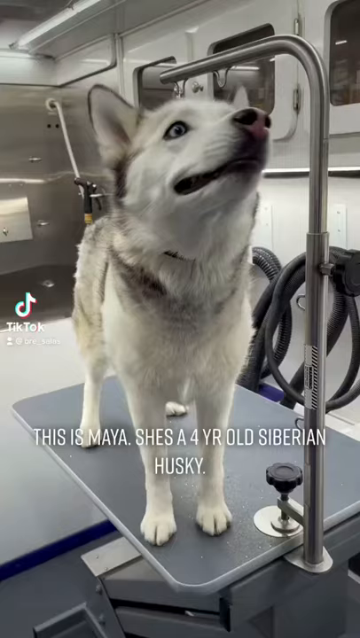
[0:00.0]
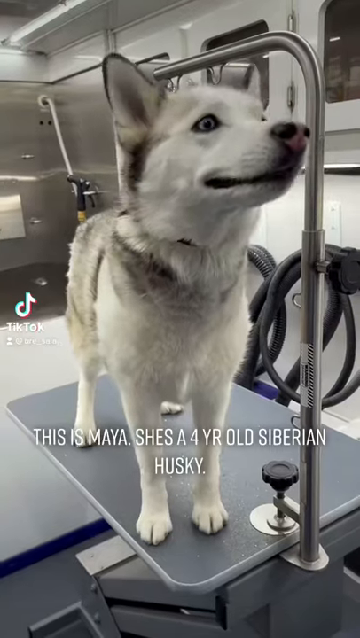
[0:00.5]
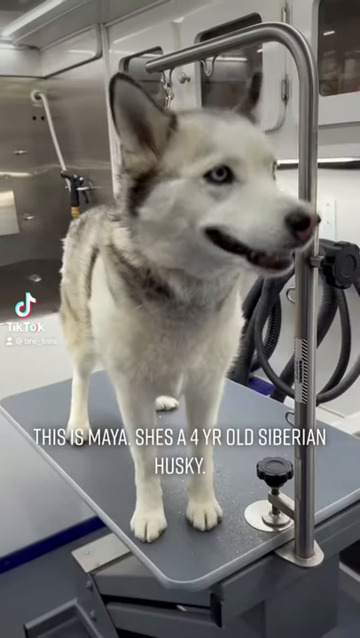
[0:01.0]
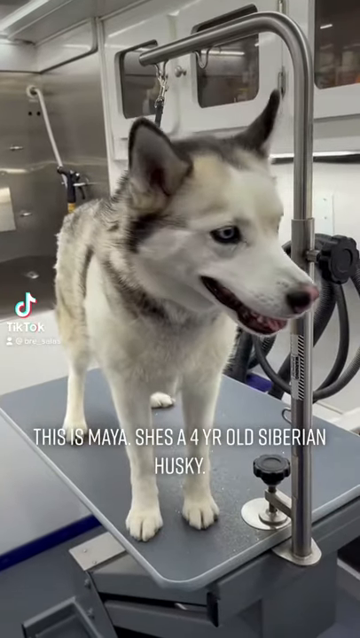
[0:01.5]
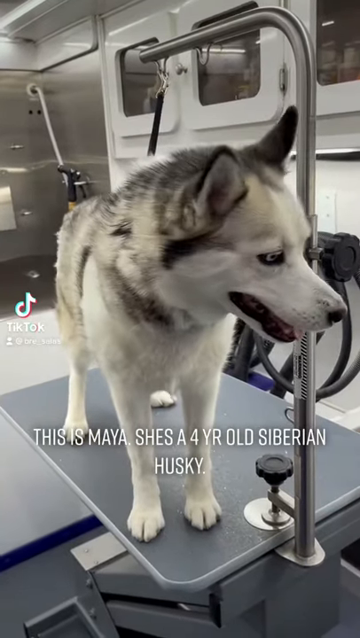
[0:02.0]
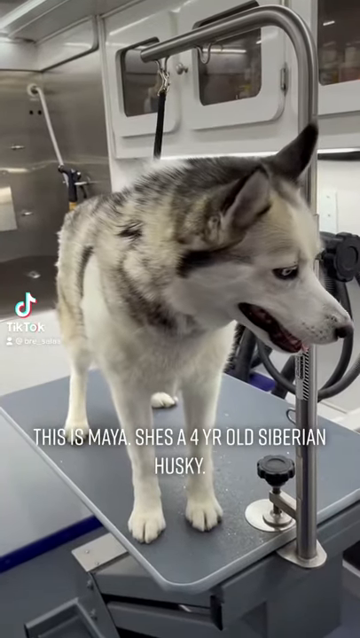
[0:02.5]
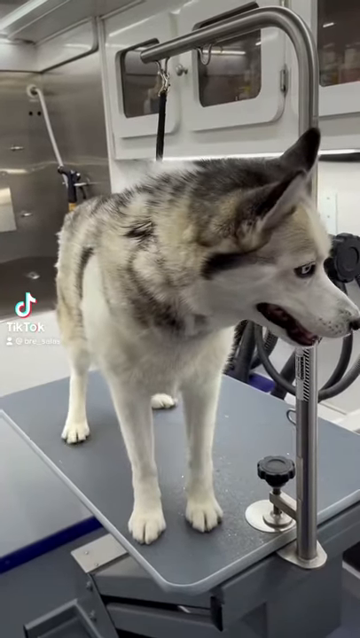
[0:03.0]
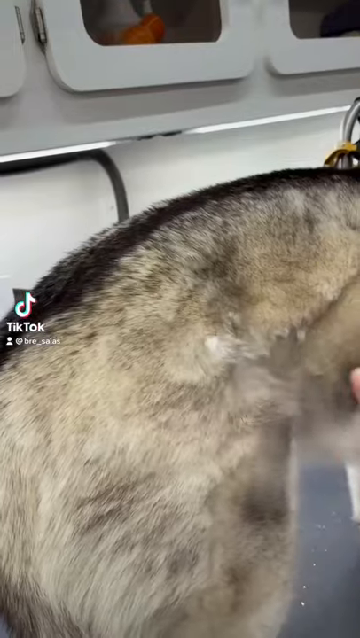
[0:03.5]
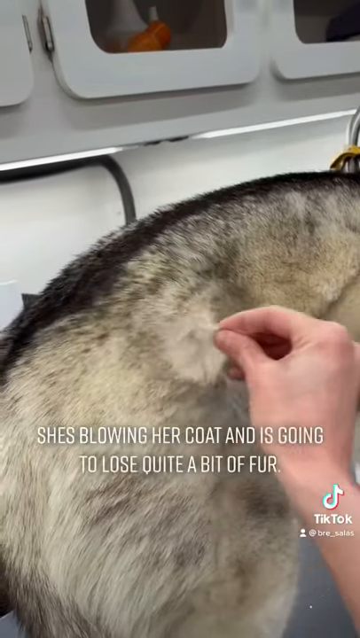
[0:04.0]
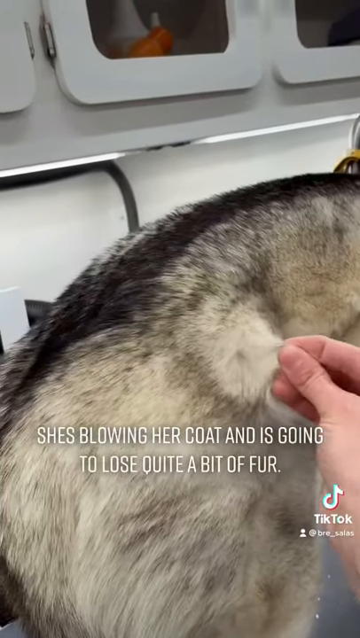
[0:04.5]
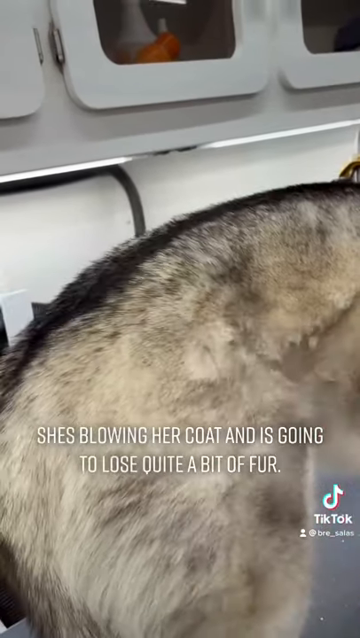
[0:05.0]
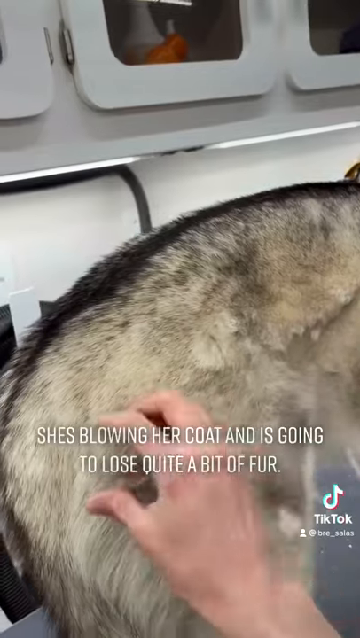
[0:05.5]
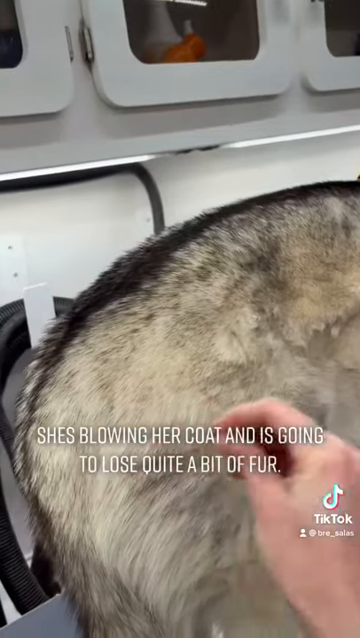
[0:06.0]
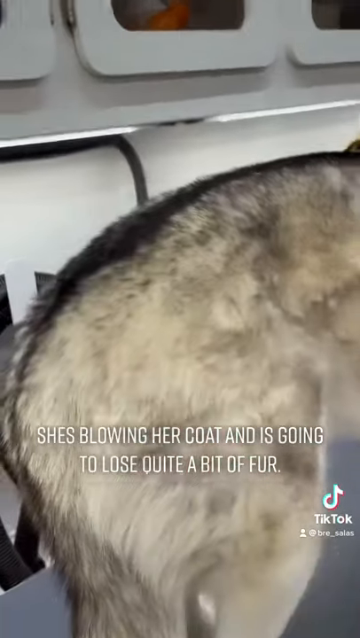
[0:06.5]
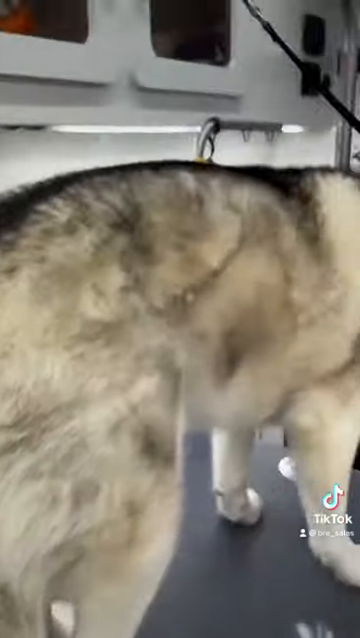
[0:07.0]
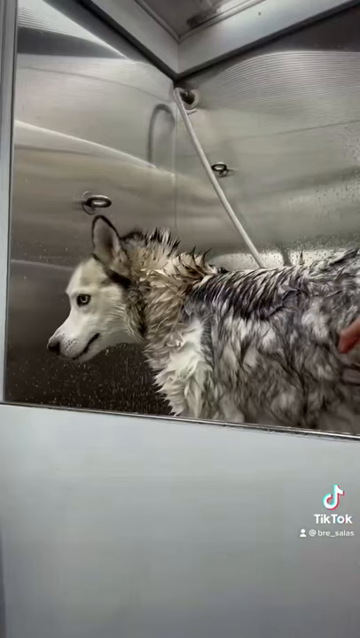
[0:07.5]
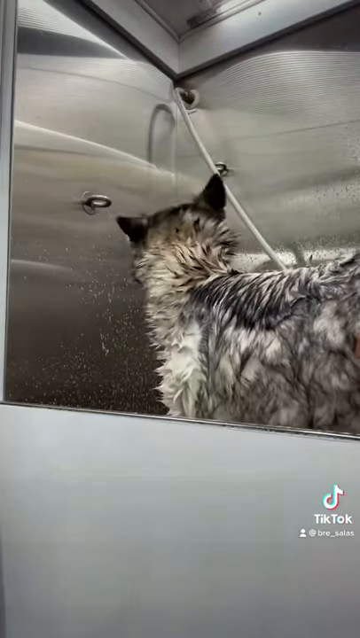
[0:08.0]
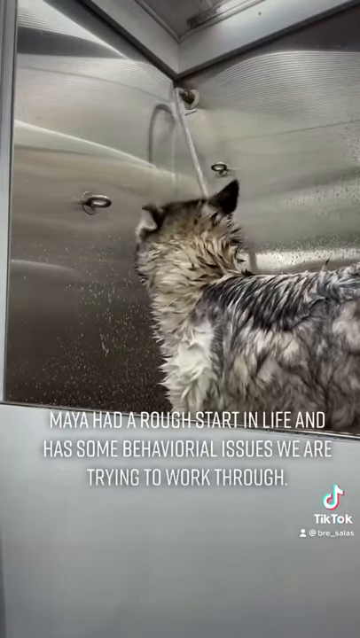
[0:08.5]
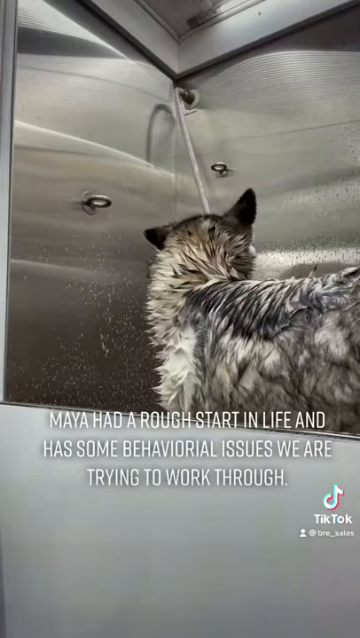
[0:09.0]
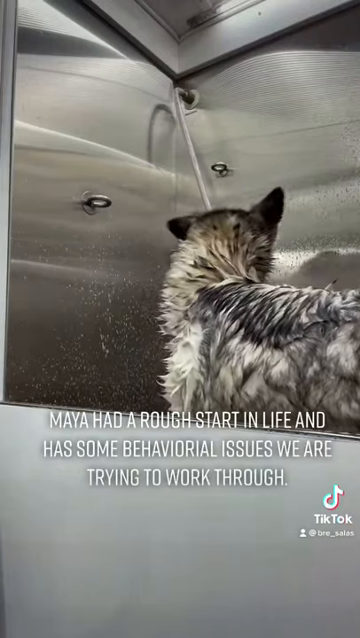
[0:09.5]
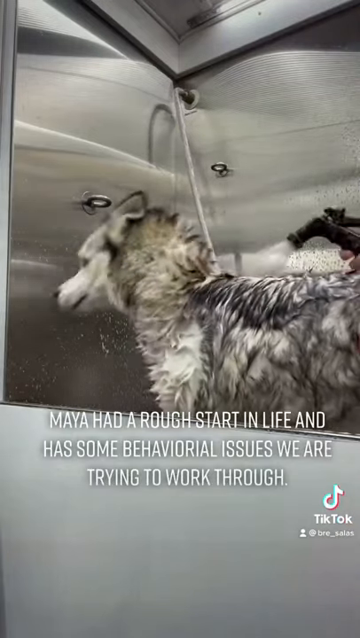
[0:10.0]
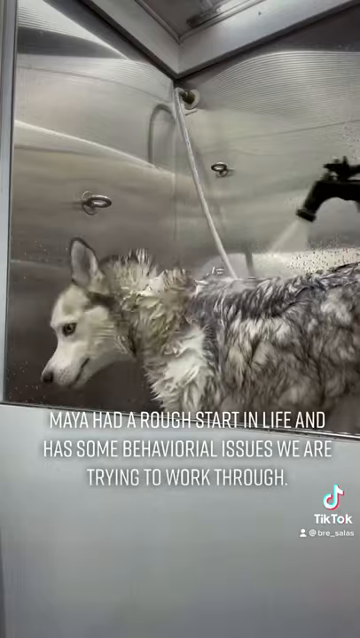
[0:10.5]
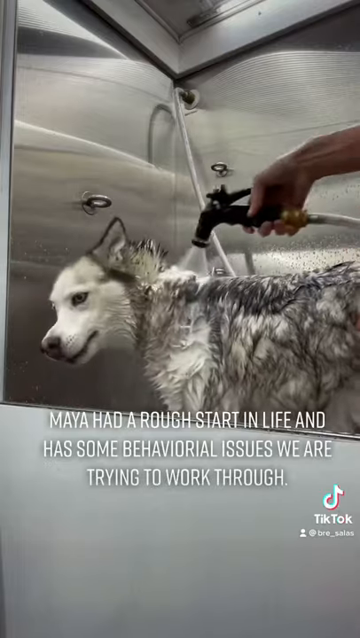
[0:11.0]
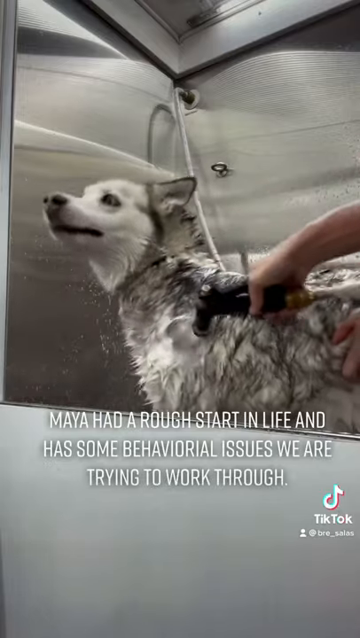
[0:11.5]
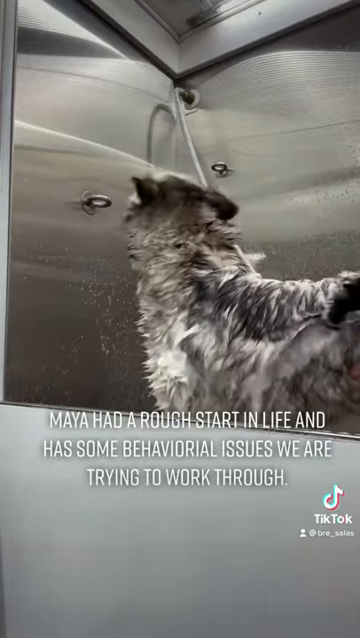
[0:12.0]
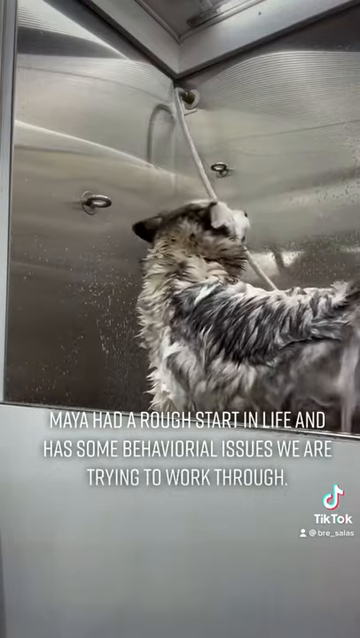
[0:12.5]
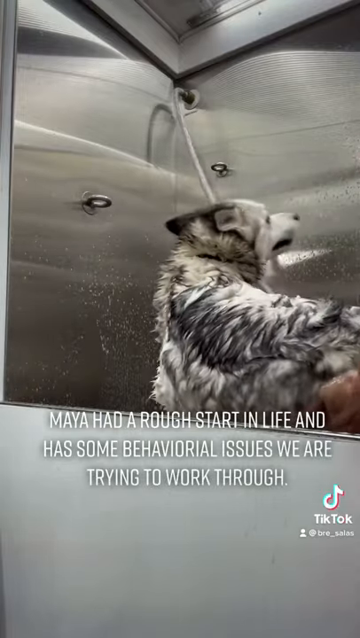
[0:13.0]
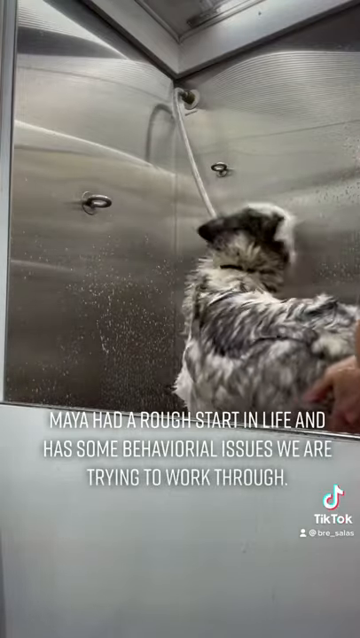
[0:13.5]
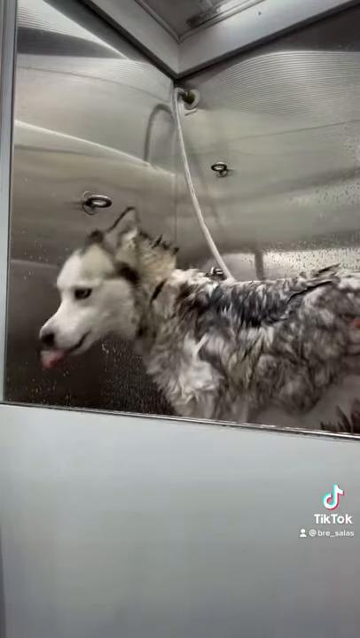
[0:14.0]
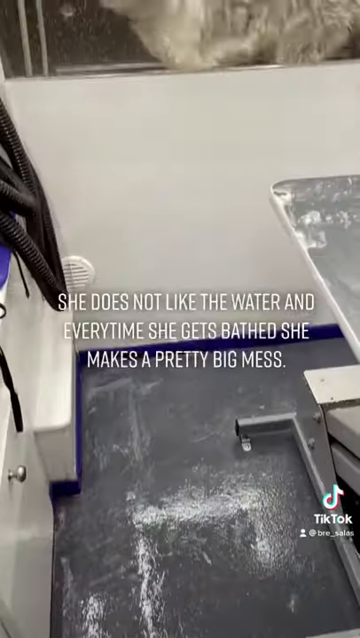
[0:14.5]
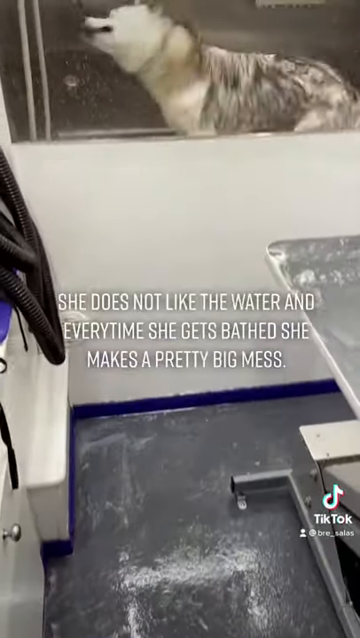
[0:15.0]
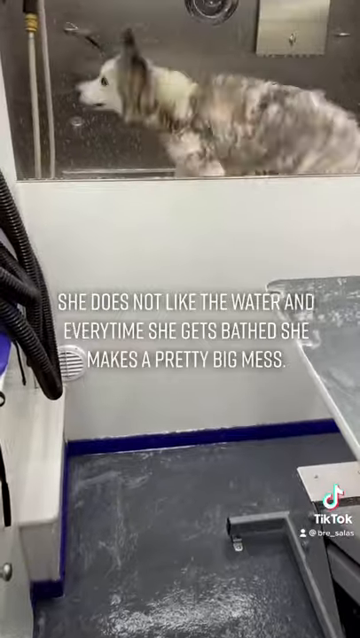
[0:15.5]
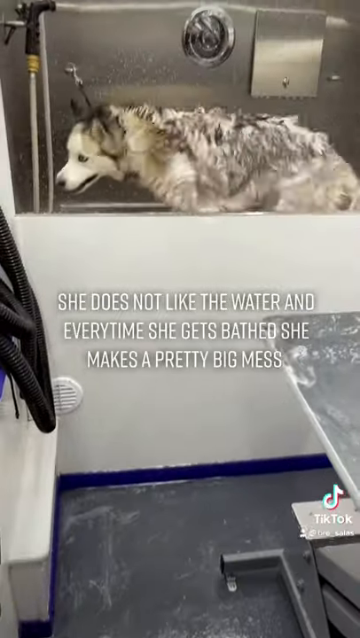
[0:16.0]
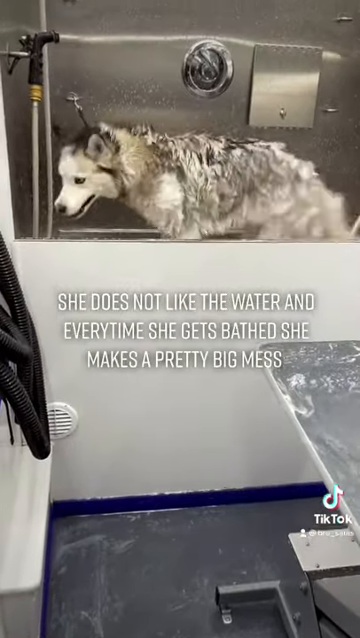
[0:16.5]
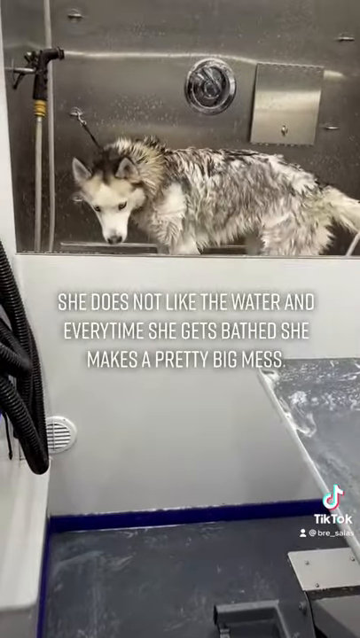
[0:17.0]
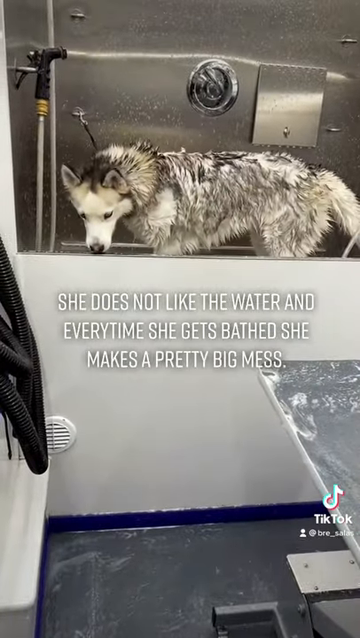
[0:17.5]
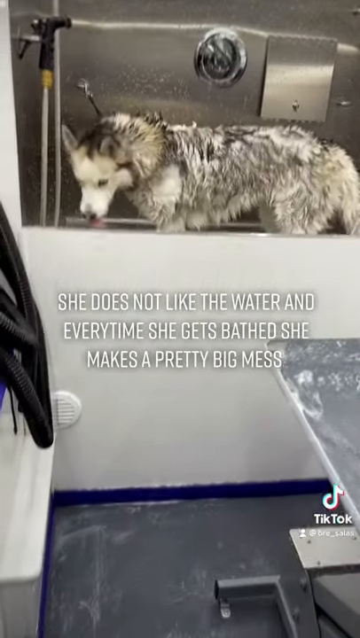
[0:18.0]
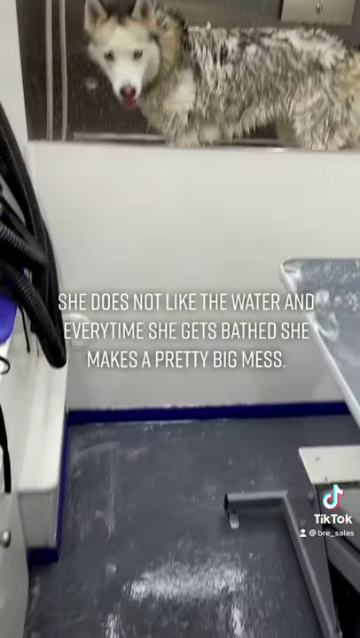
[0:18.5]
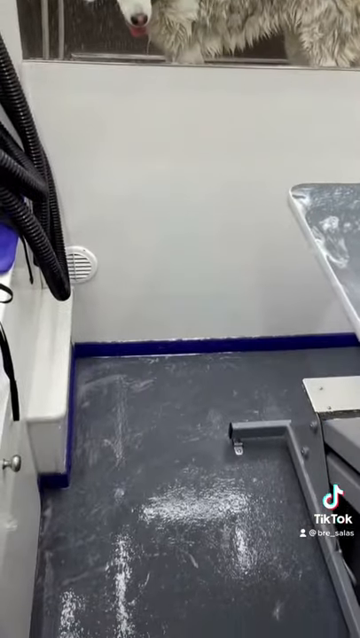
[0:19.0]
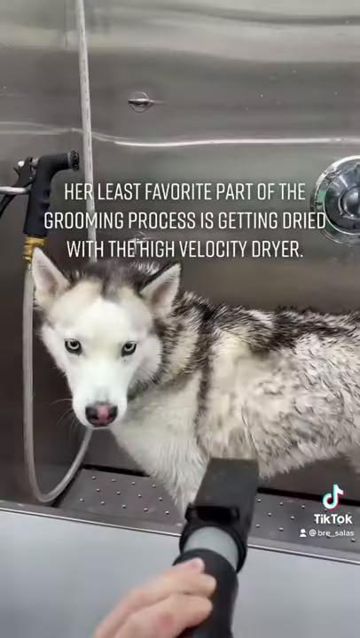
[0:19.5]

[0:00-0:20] At the start, what looks to be a Siberian husky is being groomed at a groomer's. The dog is medium-sized, with white and black fur that has more of a grayish tint. Throughout the video, various shots of the dog appear along with text about it, stating that the dog's name is Maya and that she is a four-year-old Siberian husky who is not a fan of water. When the dog takes a bath, it often makes a huge mess, which can be seen in several shots. The text about the dog moves by quite quickly.